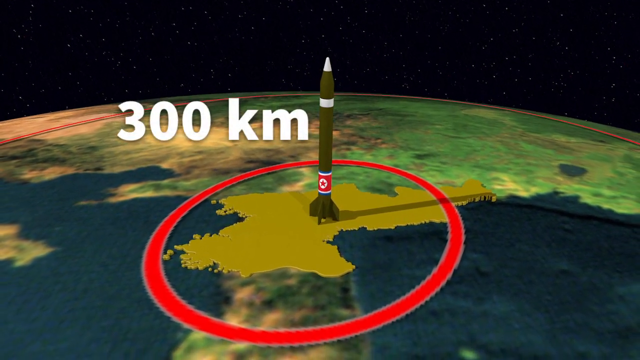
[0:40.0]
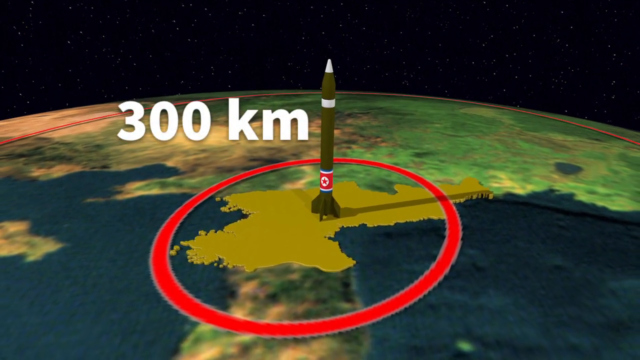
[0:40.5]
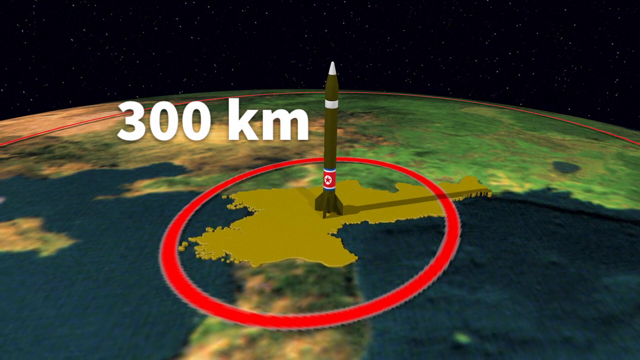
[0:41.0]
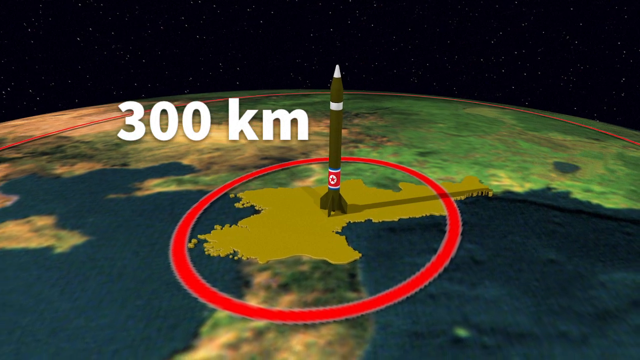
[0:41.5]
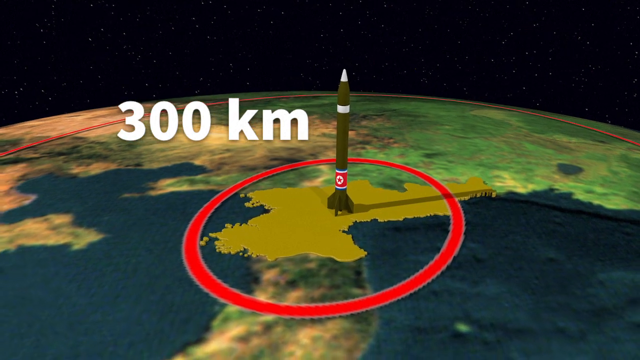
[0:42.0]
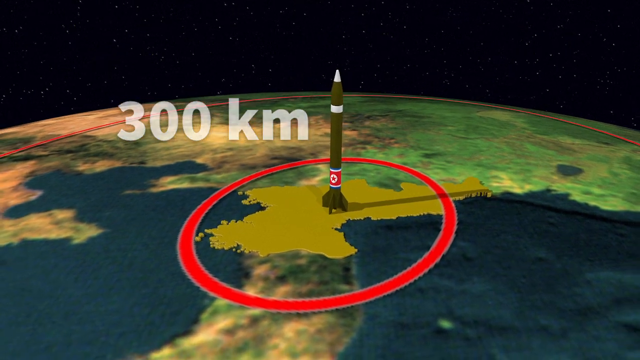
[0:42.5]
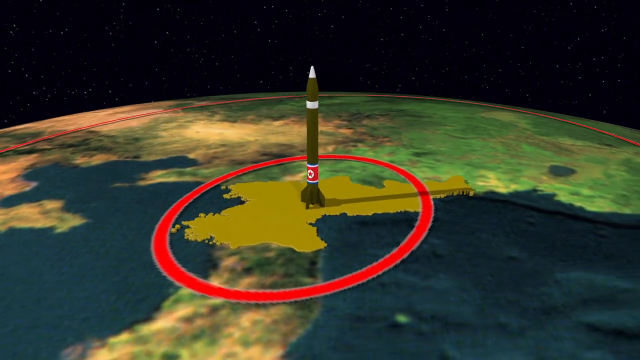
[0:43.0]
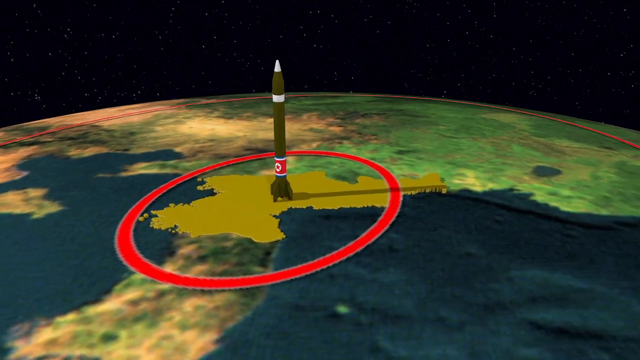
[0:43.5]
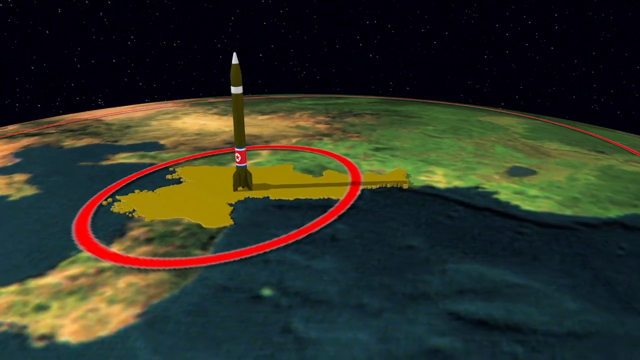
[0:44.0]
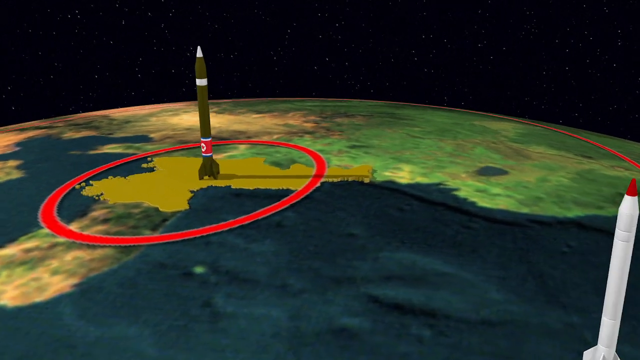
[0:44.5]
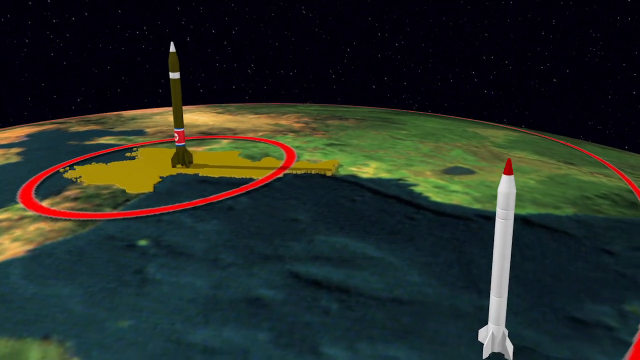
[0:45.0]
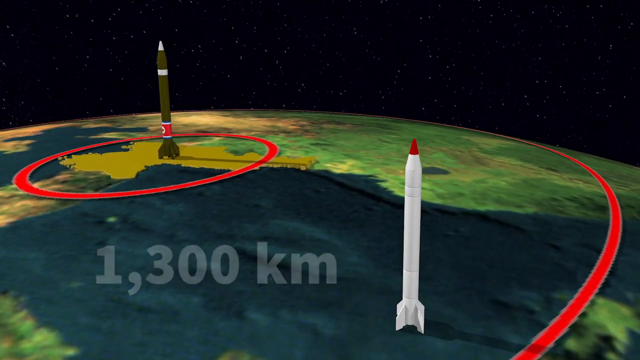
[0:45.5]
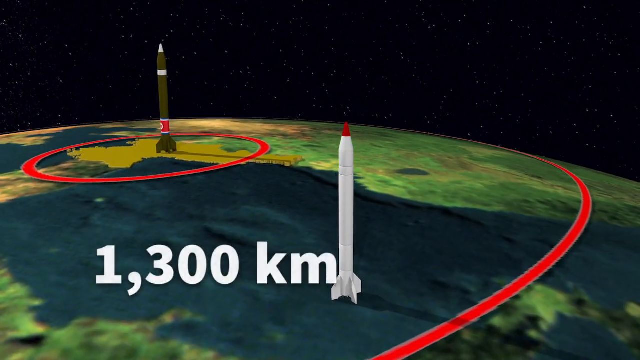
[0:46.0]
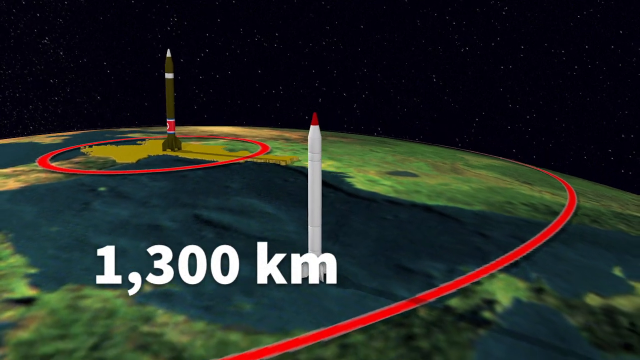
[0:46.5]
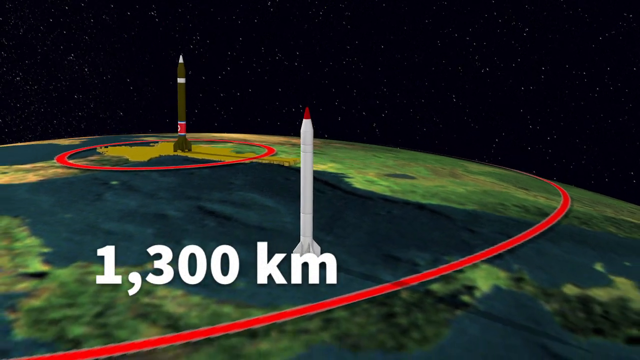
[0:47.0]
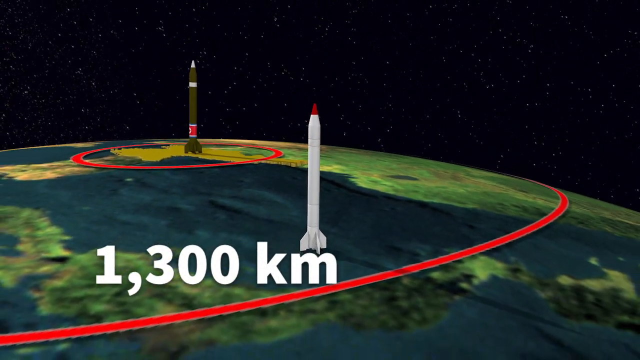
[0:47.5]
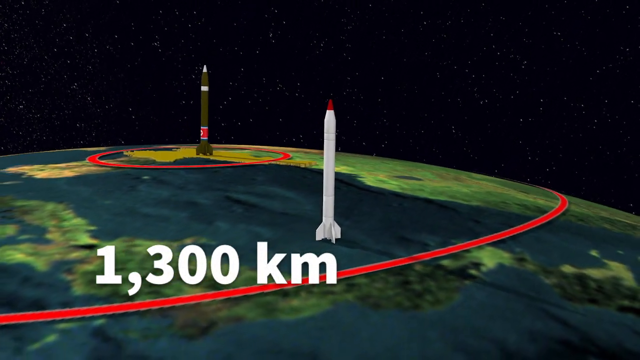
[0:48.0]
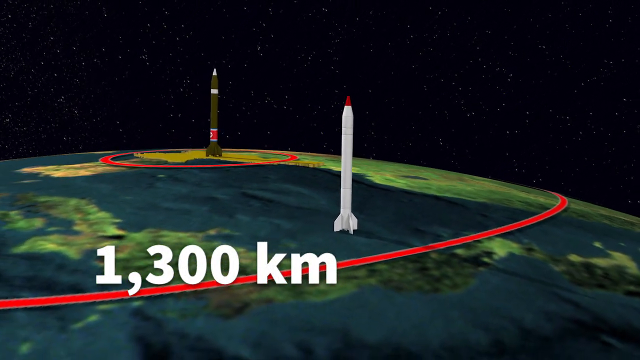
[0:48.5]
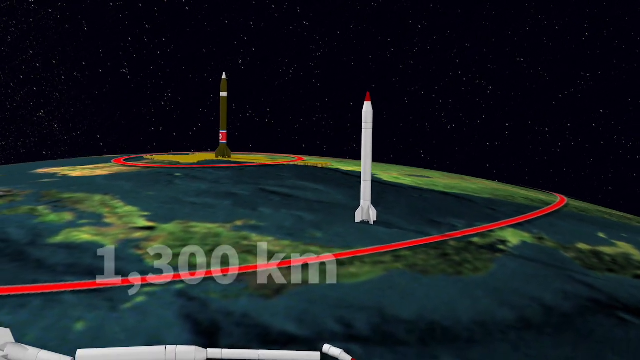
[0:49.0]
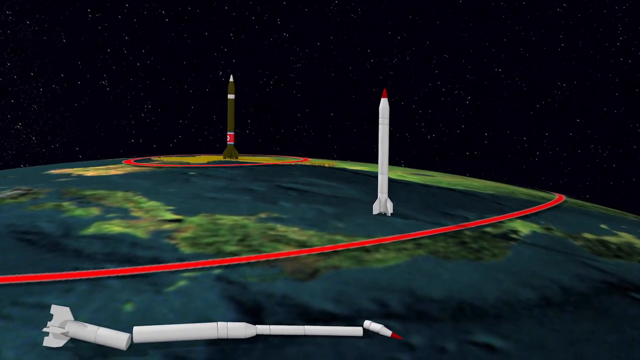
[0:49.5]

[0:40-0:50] A large red circle completely surrounds the white tip. The view zooms out and moves toward the west, where another rocket, white with a red tip, is at 1,300 kilometers, with a red circle in this area as well. As the zoom out continues, some kind of white object is visible in the water. The graphics show the range of North Korea's missiles: the 300-kilometer one stays within the country, while the 1,300-kilometer one reaches more places.